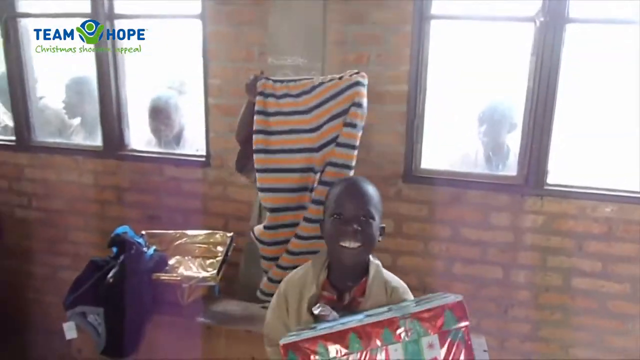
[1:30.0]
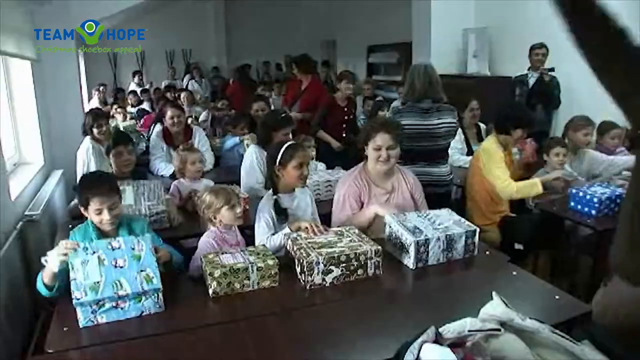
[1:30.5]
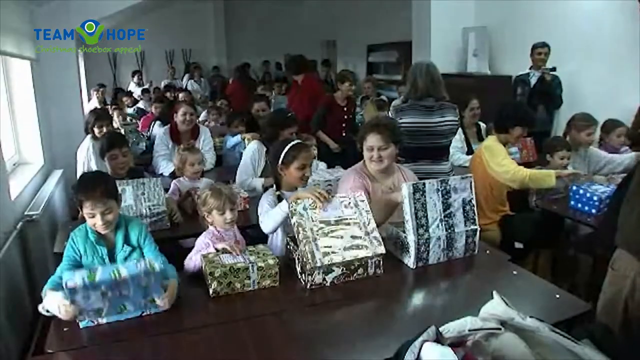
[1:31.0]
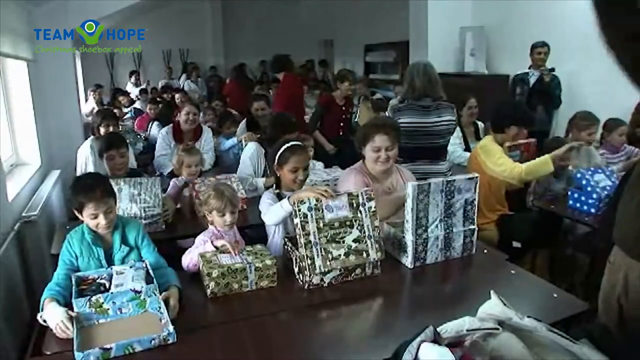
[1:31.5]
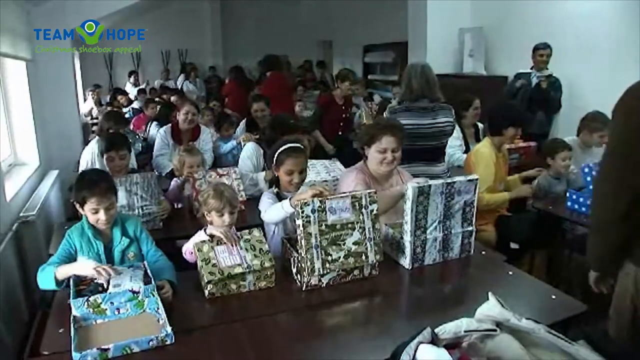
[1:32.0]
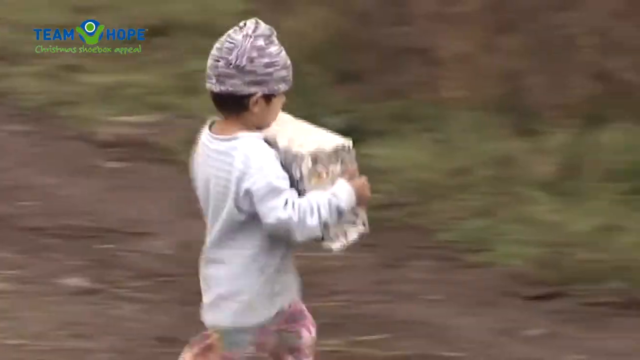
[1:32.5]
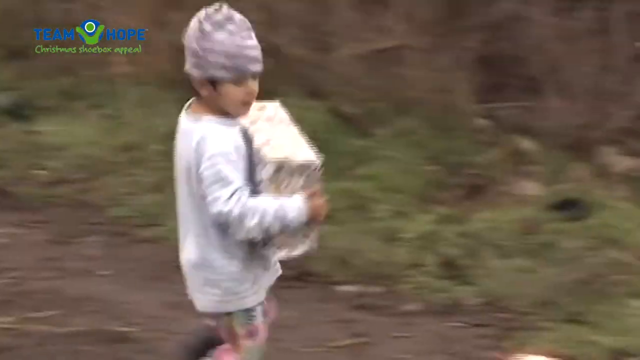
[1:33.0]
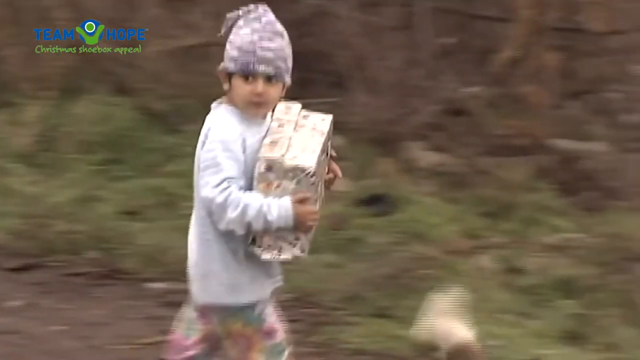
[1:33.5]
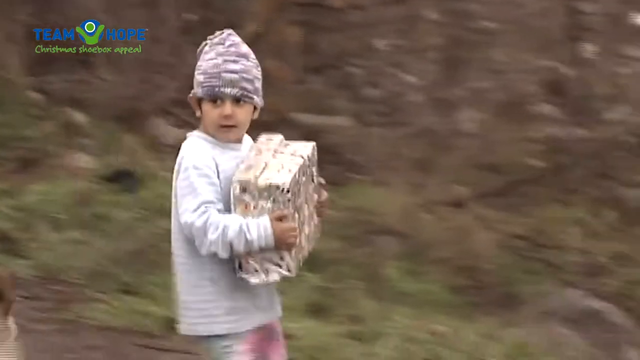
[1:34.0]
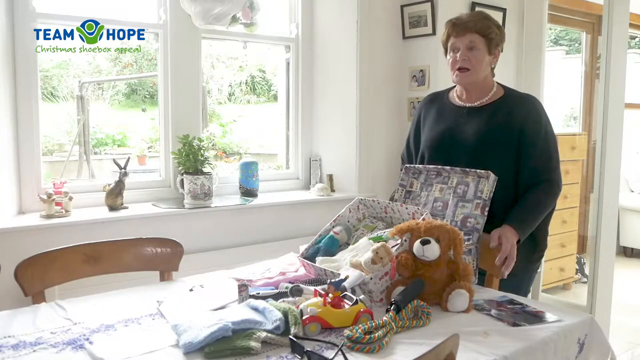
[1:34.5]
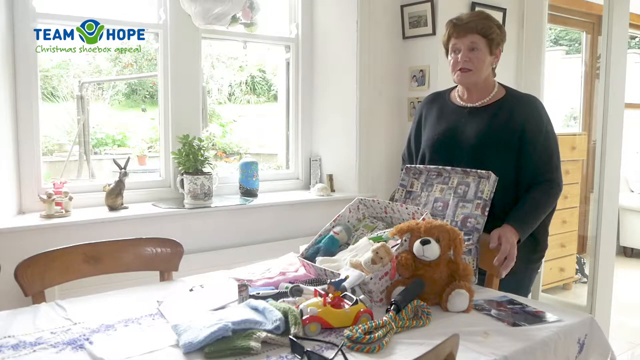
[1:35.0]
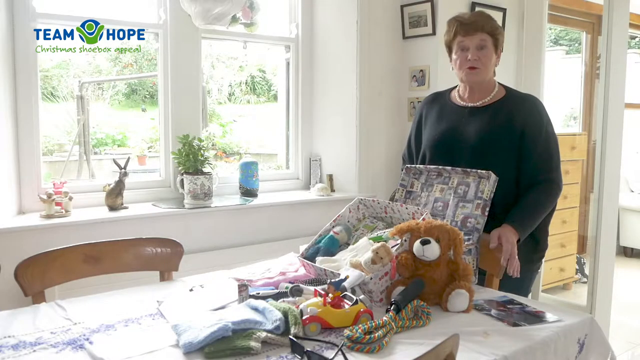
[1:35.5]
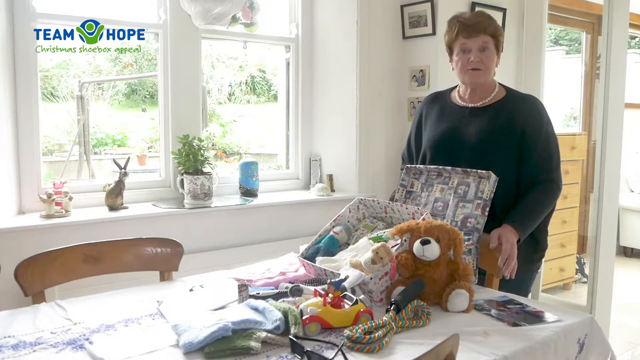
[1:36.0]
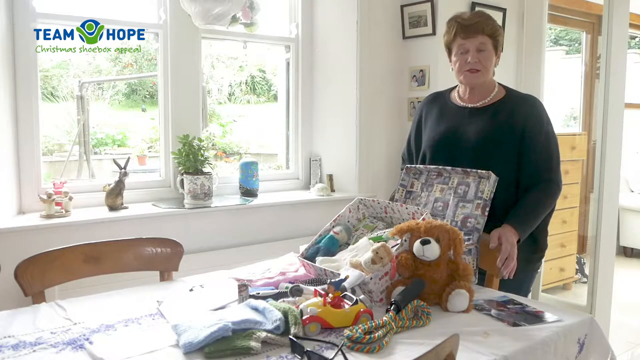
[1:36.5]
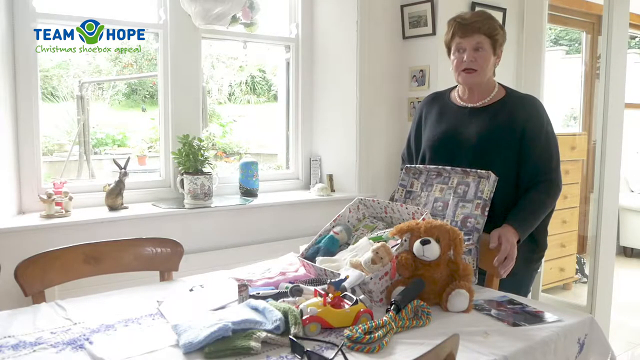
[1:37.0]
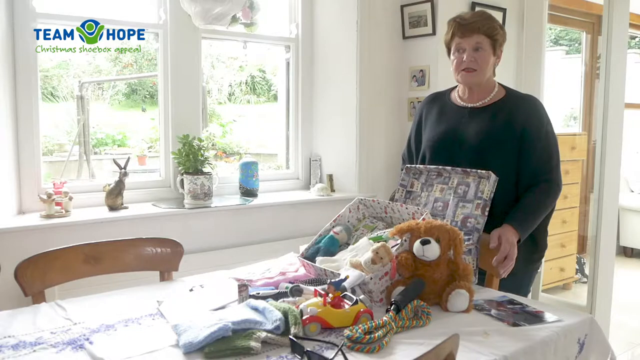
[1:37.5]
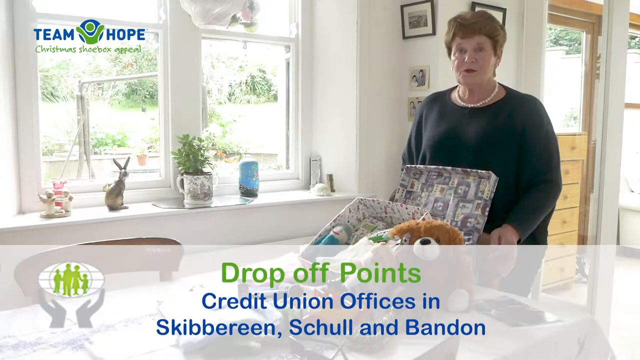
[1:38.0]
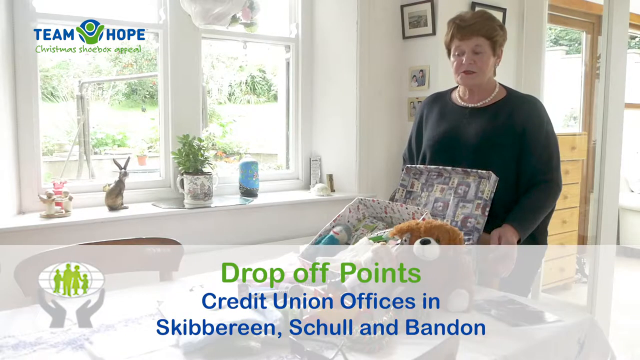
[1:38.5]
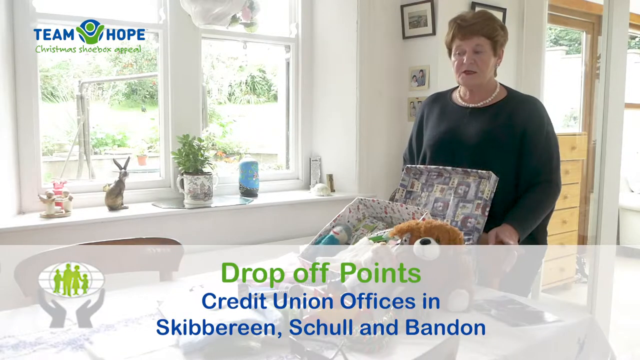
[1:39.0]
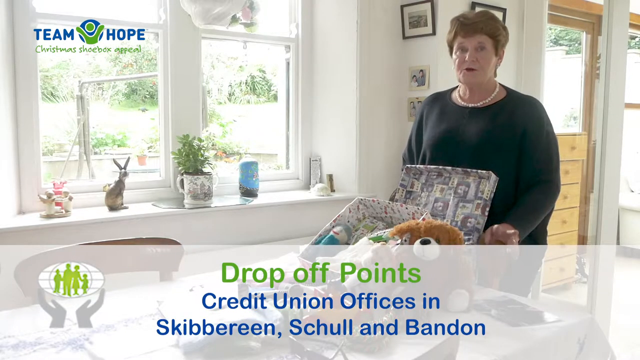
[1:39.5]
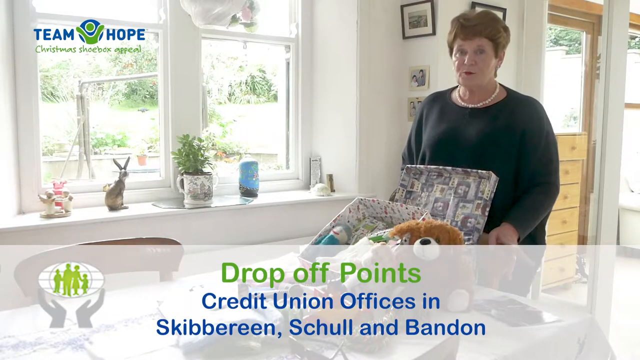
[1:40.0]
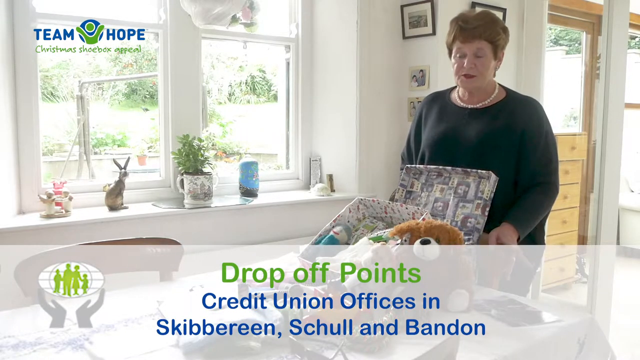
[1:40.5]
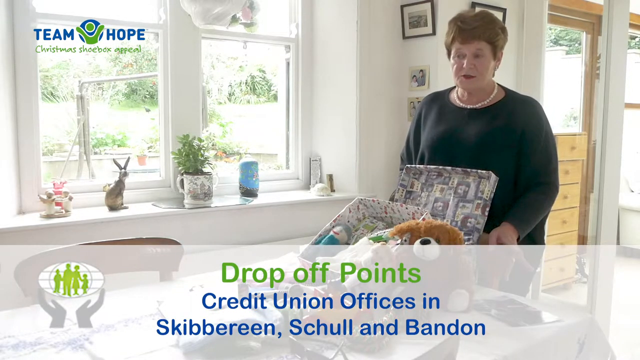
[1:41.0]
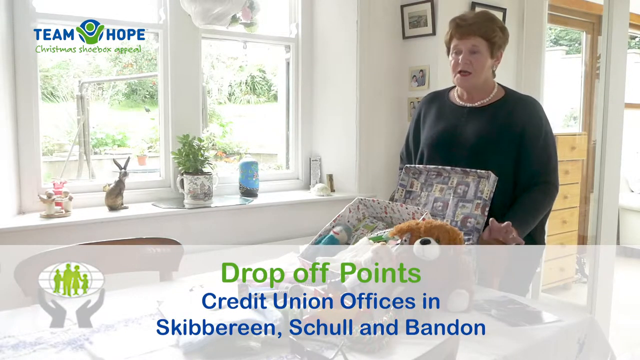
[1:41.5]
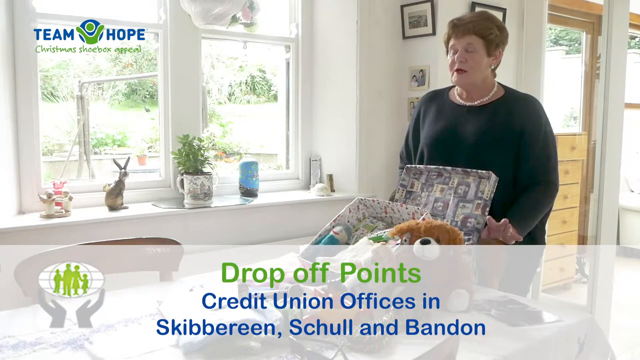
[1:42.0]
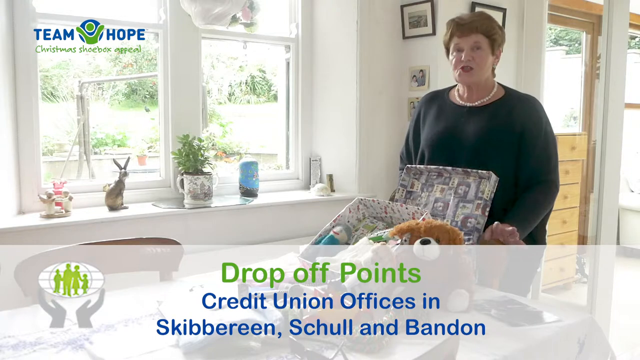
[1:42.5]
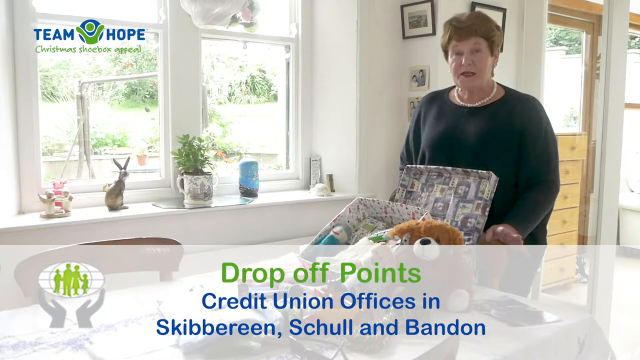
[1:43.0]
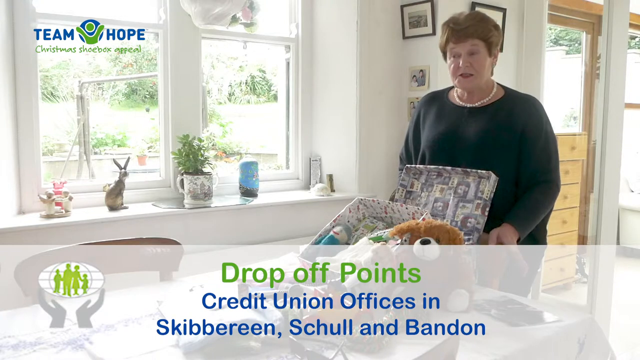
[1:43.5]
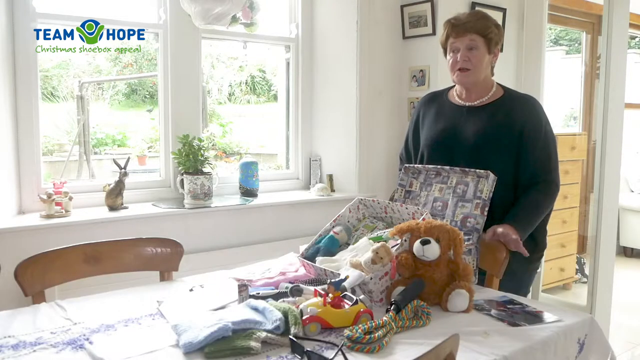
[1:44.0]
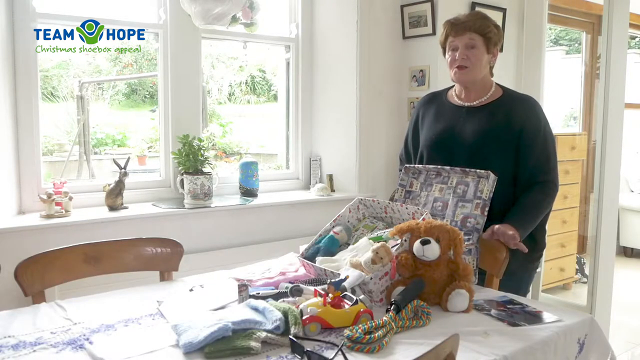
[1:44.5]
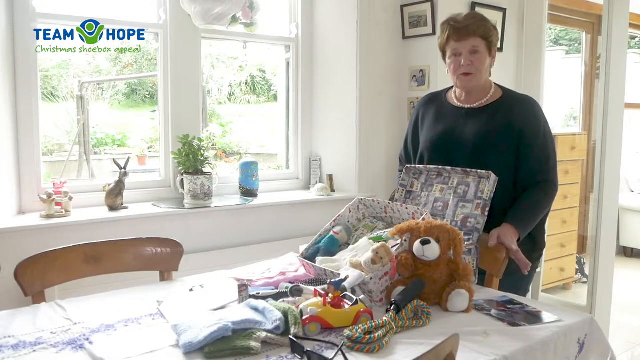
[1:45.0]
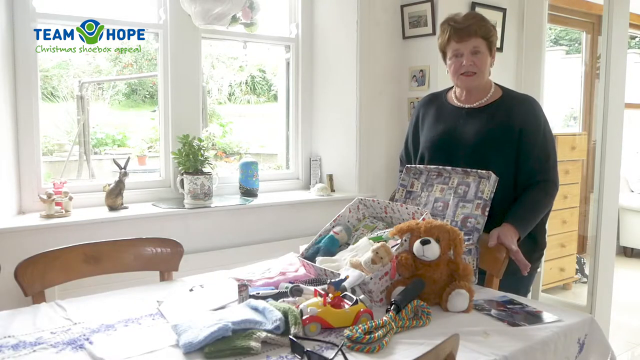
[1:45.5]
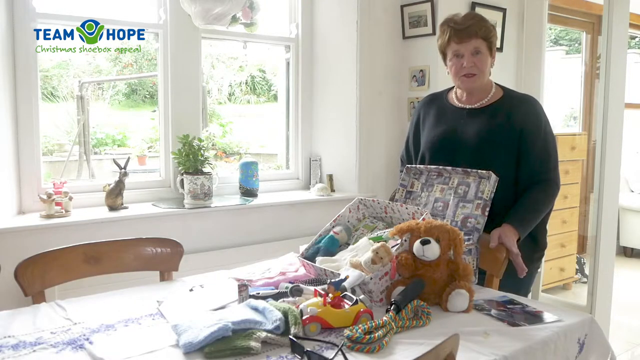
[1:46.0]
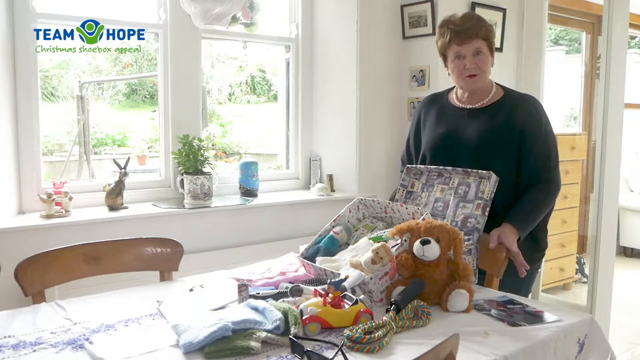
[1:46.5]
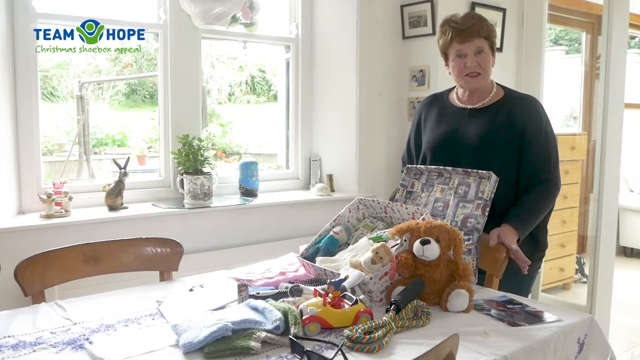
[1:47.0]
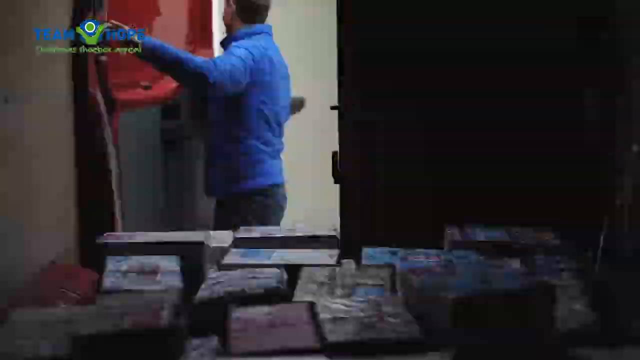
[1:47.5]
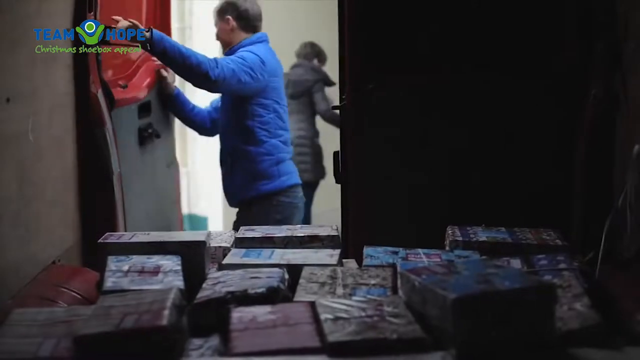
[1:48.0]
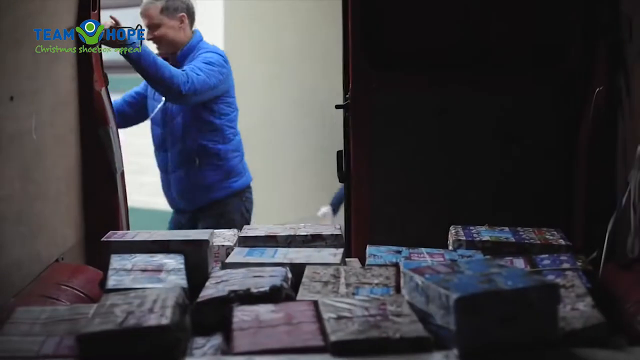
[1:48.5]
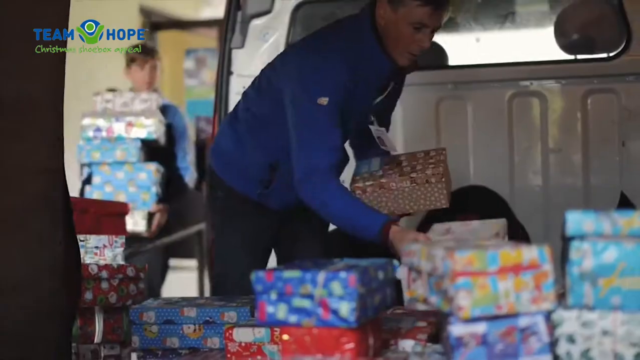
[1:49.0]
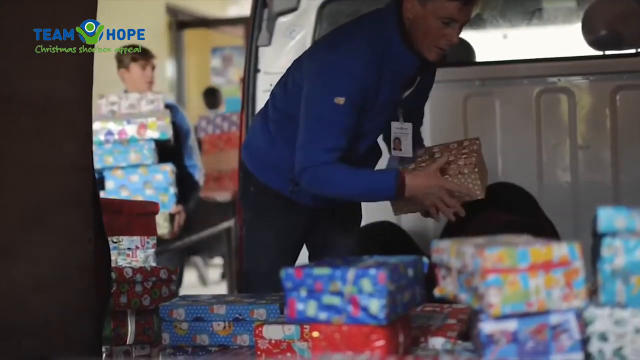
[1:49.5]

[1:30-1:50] A room is lined with long tables, with children sitting on one side of the tables and their boxes in front of them. People are at the front of the room and the children look toward the front; families are gathered in the back of the room, and a man to the right is filming. The children all open their boxes. The scene changes to a child running through a grassy area with his box. The graphic appears again at the bottom, reading "Drop off points, credit union offices in Skibbereen, Shoal, and Bandon."